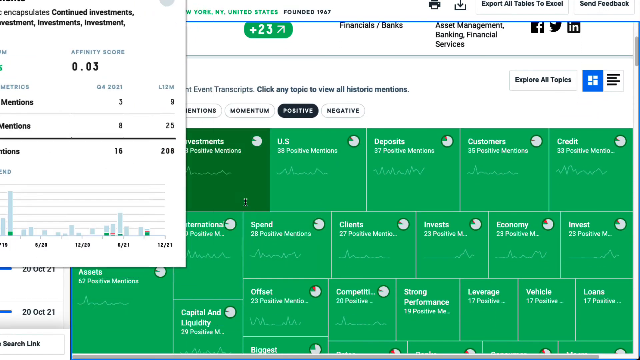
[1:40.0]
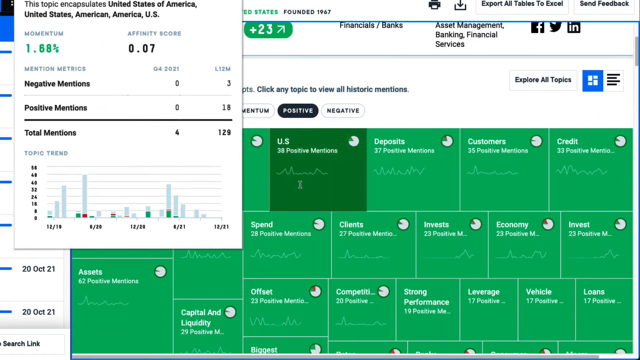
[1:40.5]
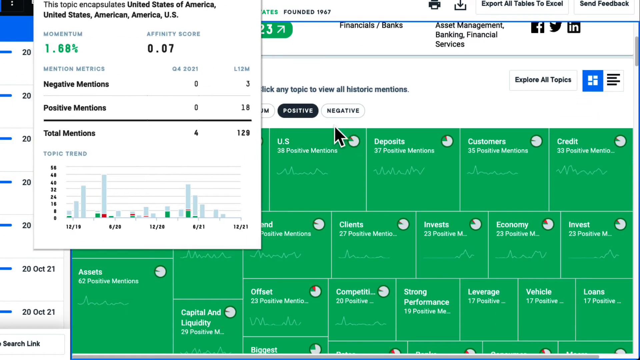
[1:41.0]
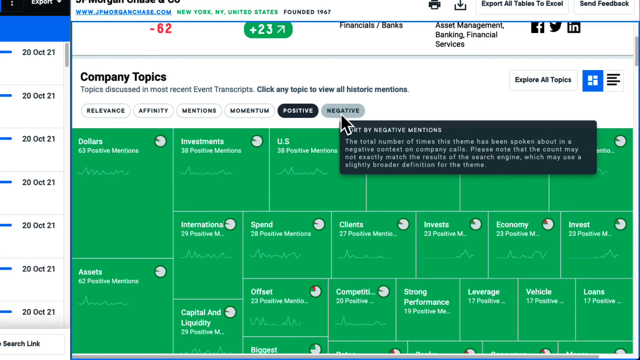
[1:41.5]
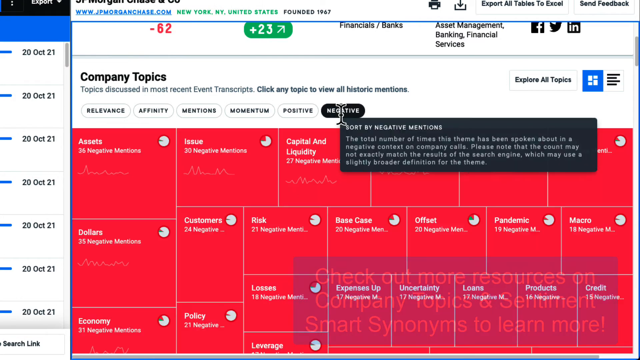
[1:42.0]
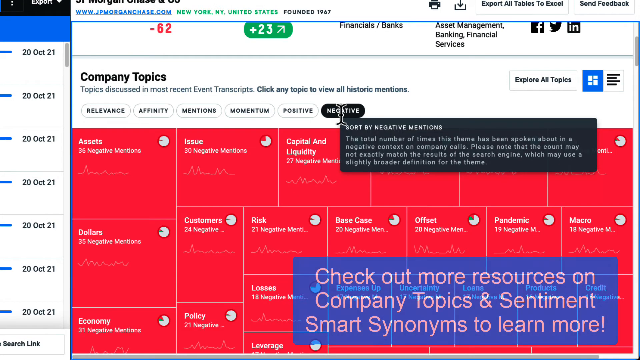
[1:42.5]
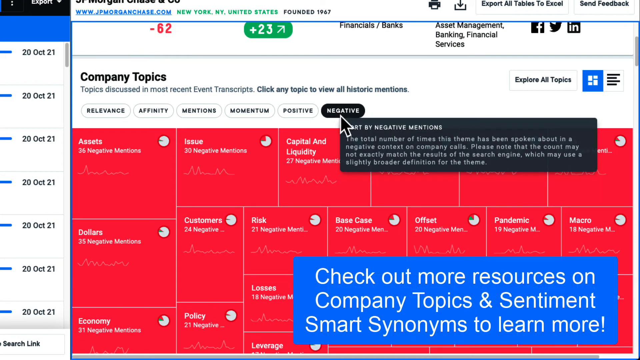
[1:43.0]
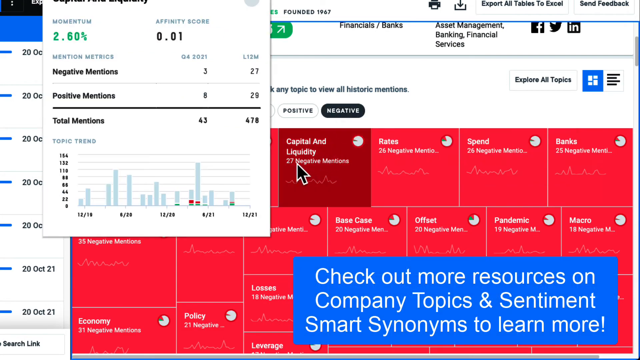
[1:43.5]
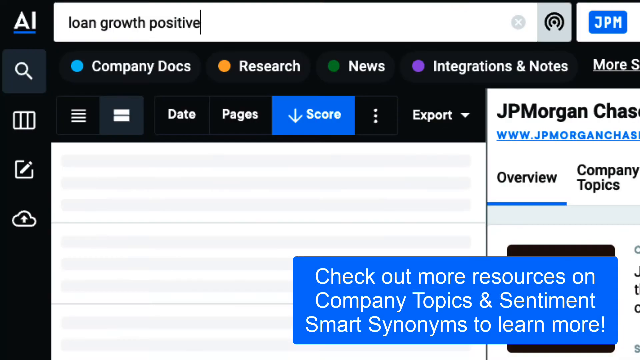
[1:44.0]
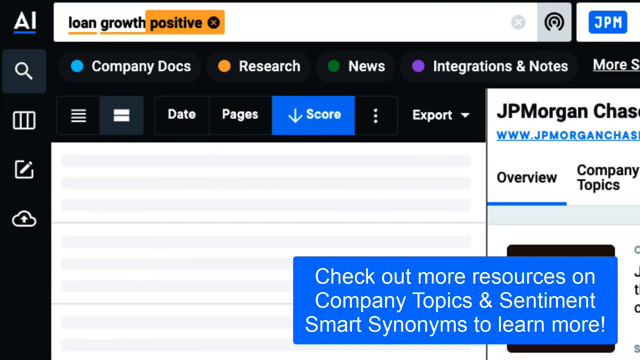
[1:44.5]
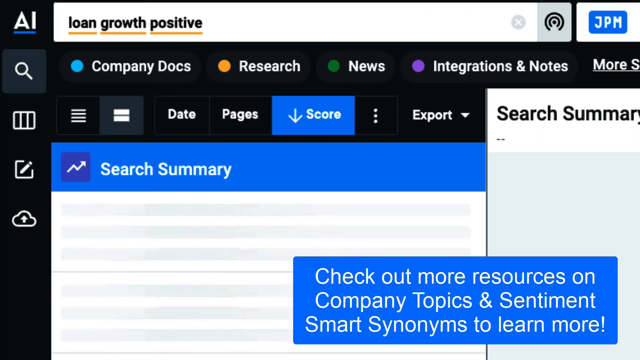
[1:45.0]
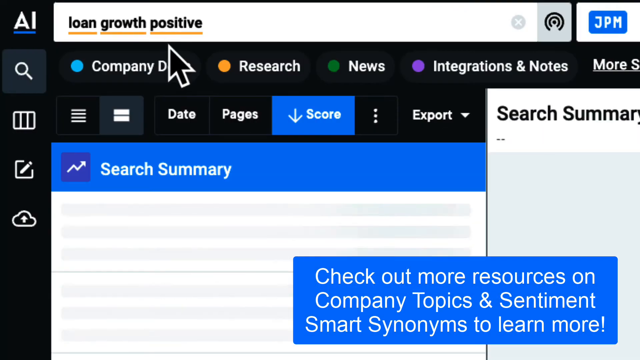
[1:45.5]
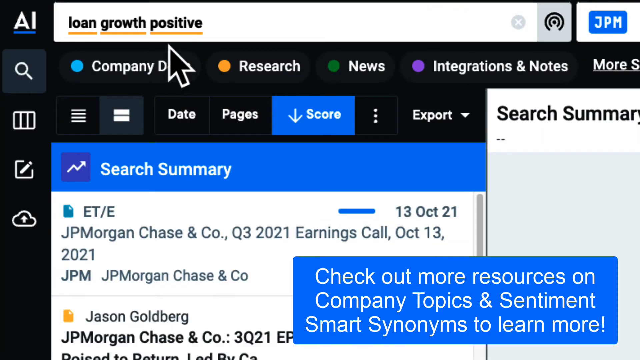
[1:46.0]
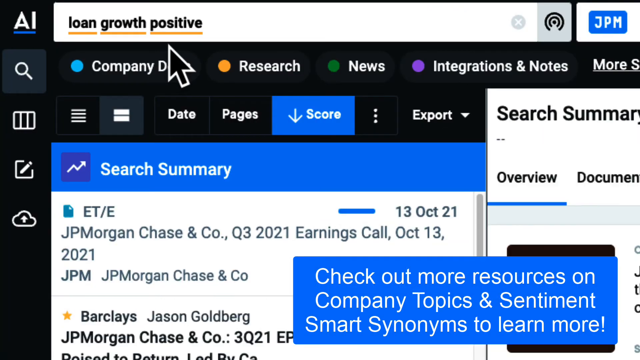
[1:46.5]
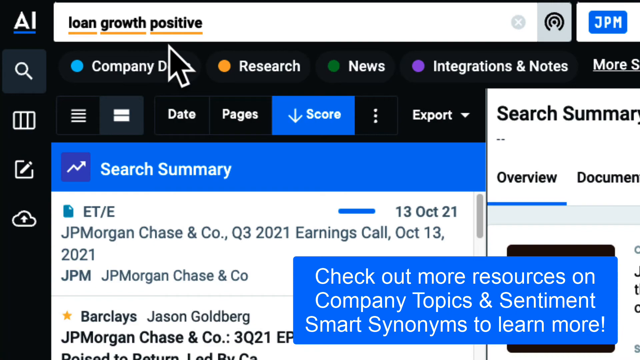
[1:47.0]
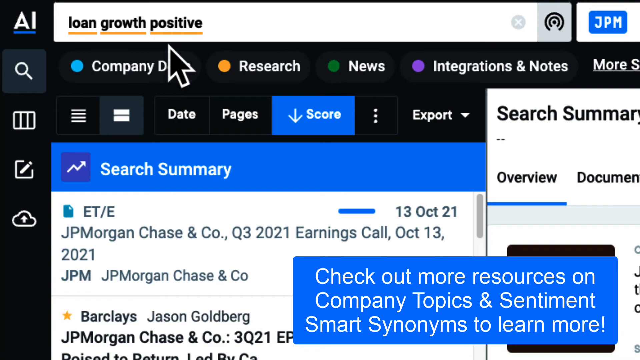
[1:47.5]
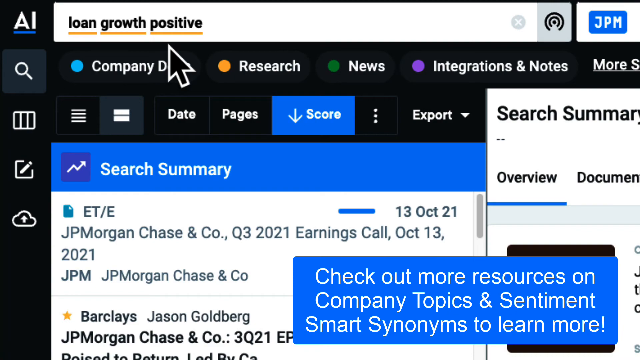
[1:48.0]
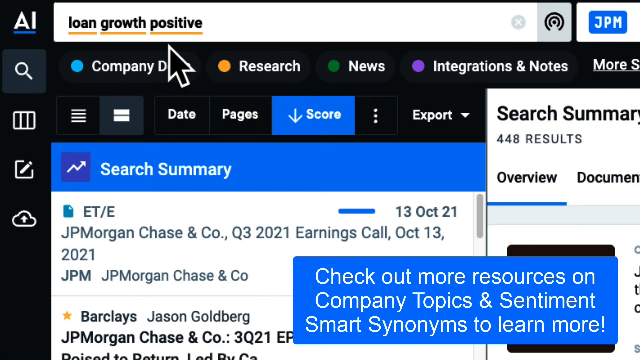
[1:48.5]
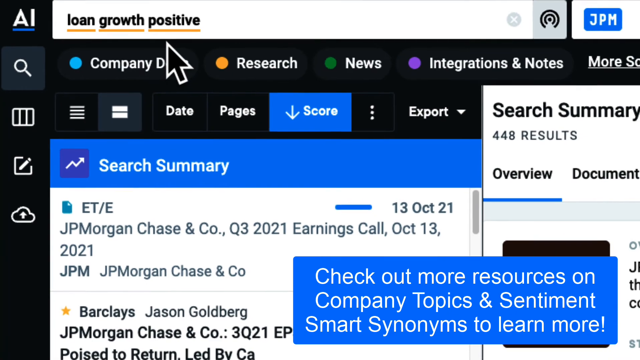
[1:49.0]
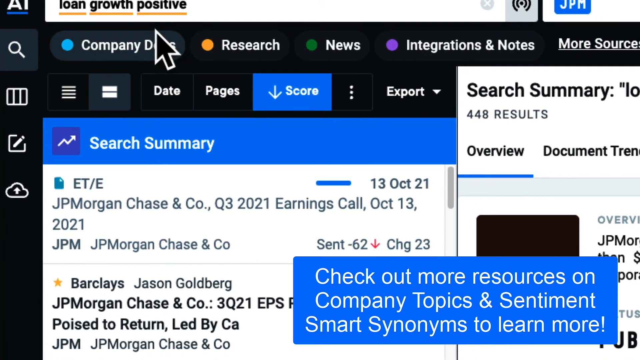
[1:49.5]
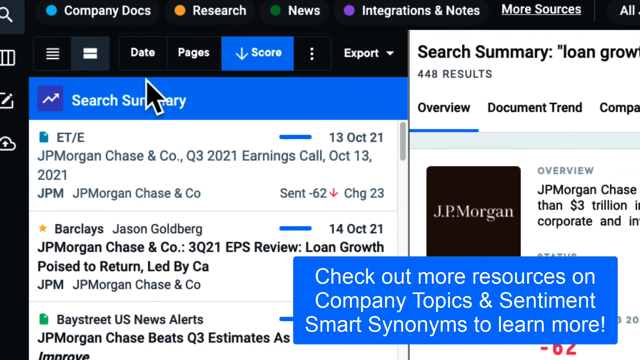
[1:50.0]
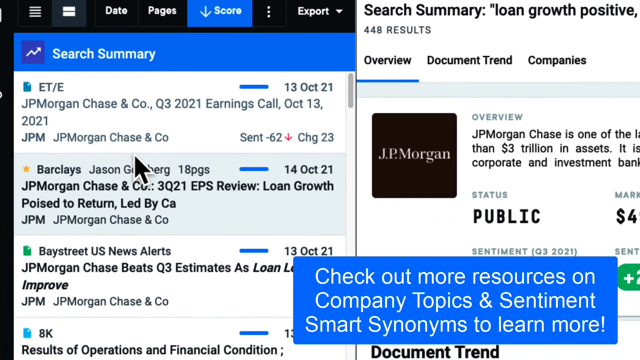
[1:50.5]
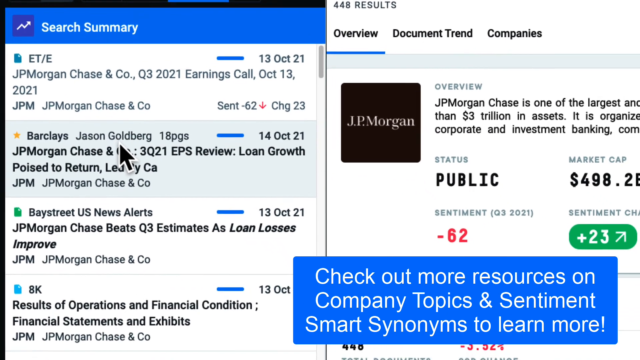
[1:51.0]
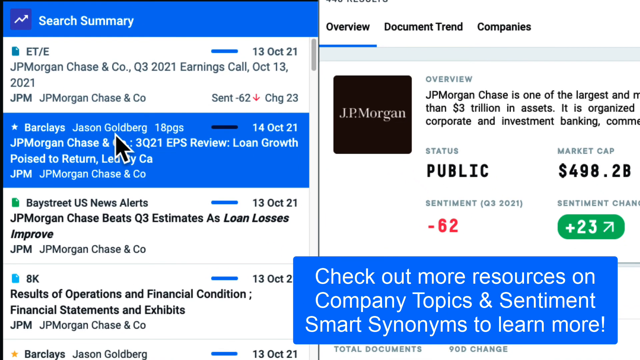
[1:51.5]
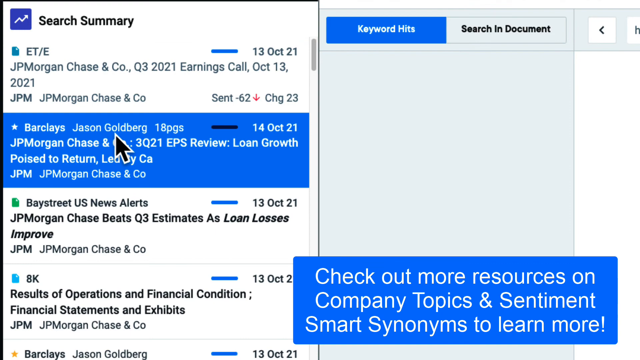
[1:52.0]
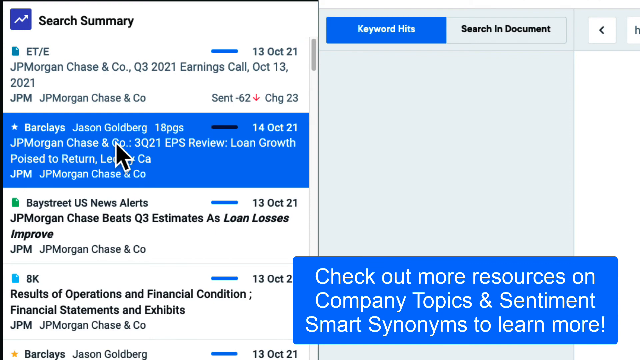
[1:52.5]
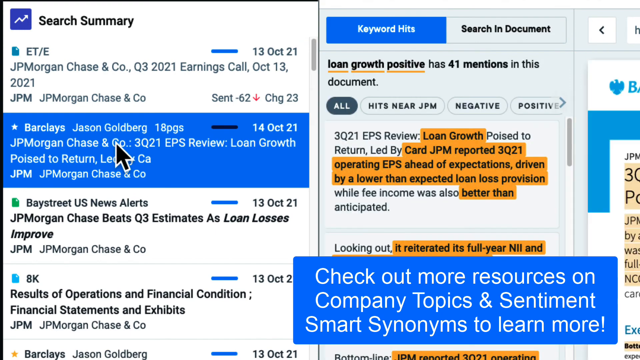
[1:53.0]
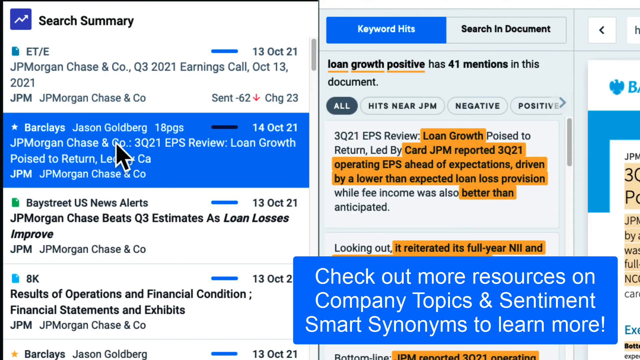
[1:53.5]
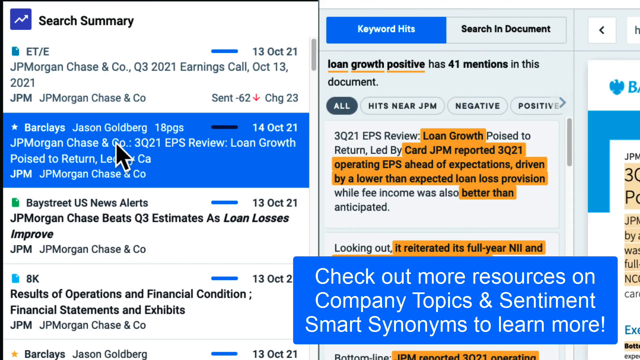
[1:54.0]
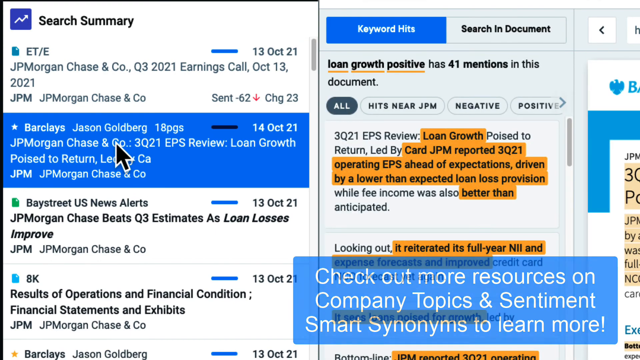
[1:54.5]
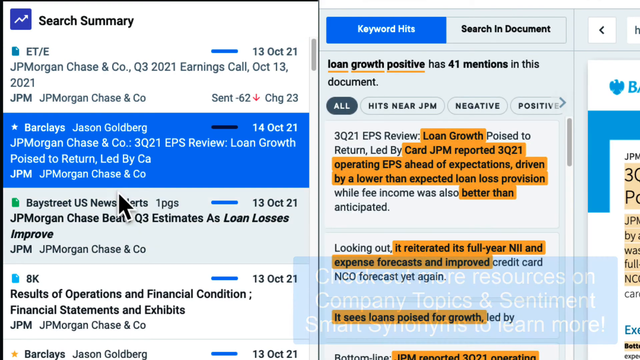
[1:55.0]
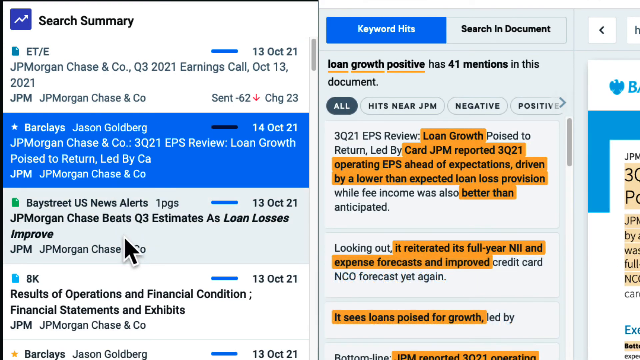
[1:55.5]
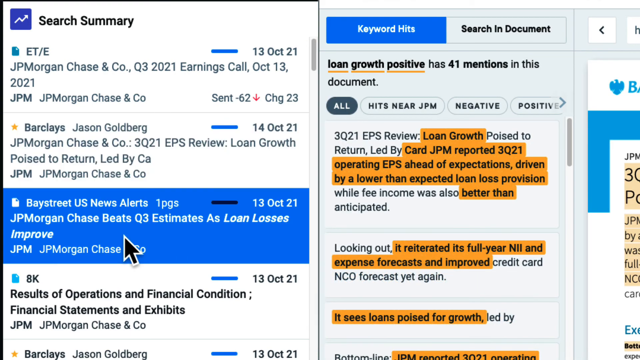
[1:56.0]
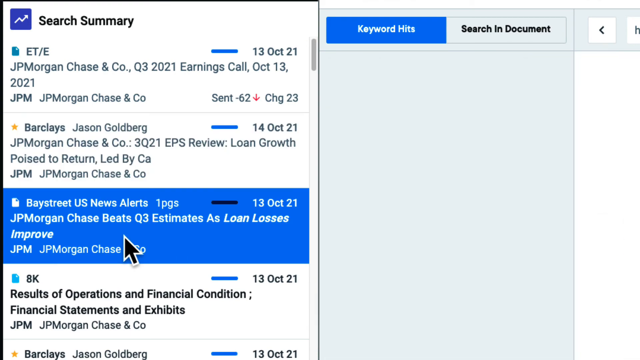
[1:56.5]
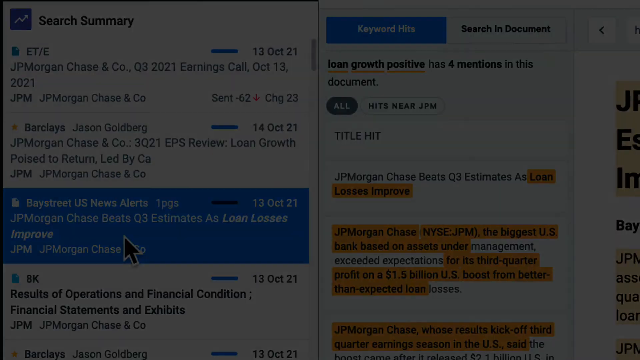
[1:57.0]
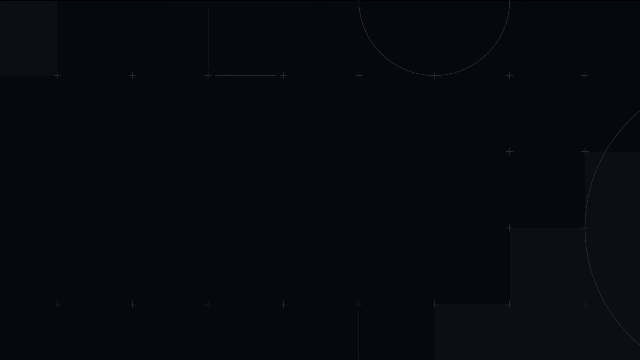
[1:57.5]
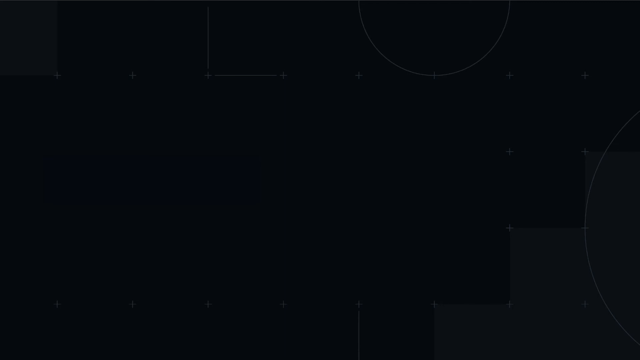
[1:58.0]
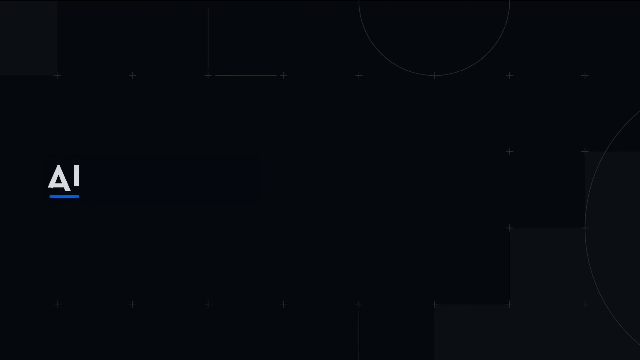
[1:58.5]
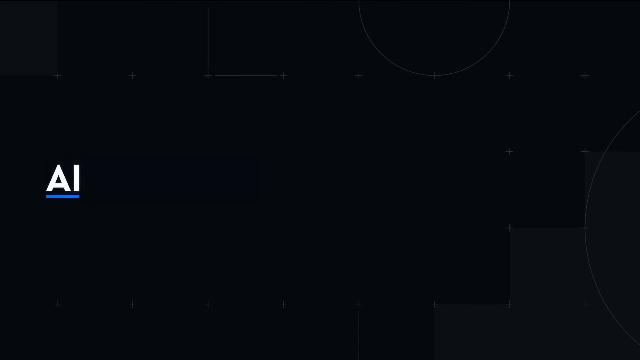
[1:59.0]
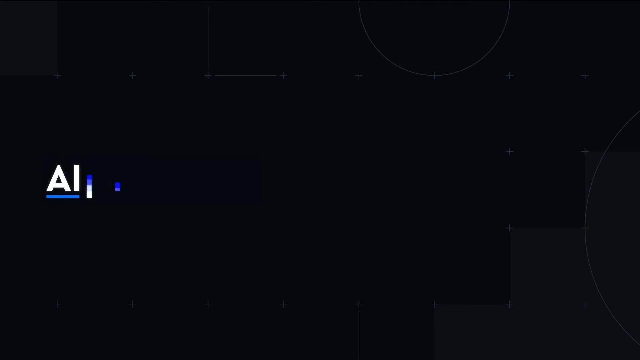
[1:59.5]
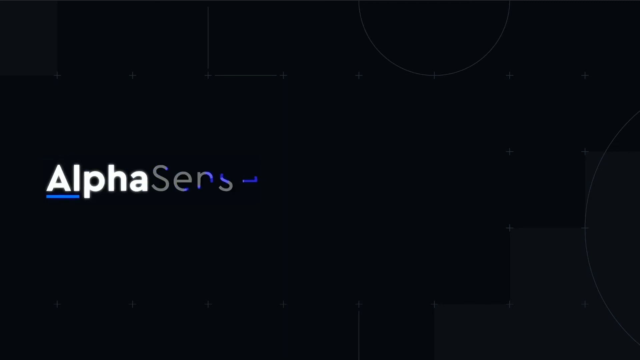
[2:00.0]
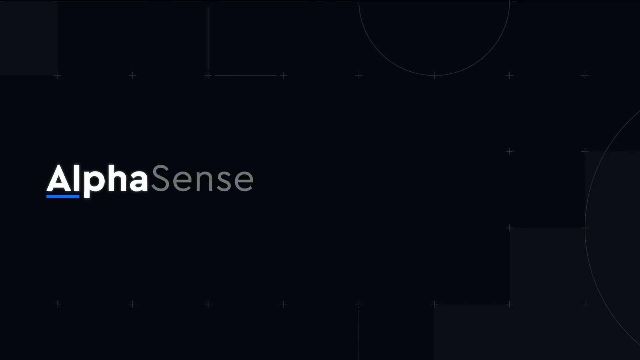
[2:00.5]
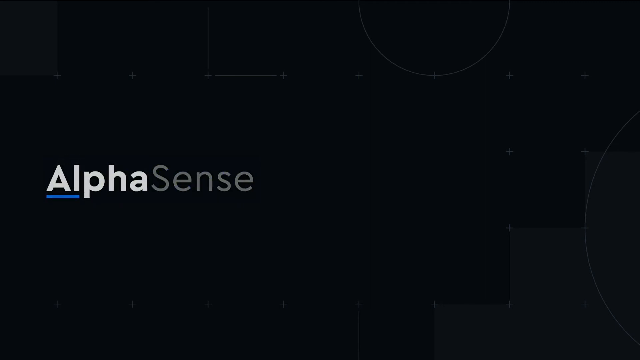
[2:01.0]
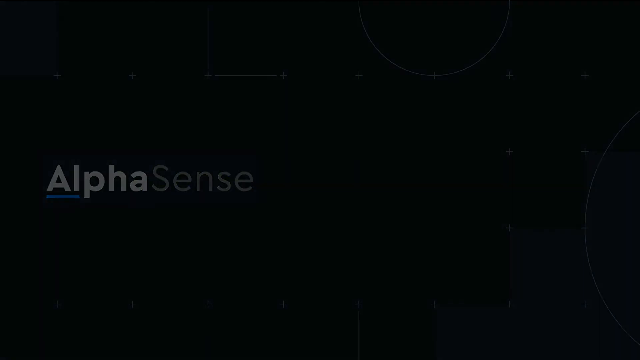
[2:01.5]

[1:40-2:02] Under company topics, with positive selected, green blocks show 63 positive mentions. While the green section is showing, the cursor is held over the negative block, and text appears: "sort by negative mentions. The total number of times the theme has been spoken about in a negative context on company calls. Please note that this count may not exactly match the results of the search engine, which may have a slightly broader definition for the theme." The view then reverts to the previous page, and a blue rectangle pops up saying "check out more resources on company topics and smart synonyms to learn more." When "Barclays Jason Goldberg, 18 pages, 14 October 21" is clicked, an orange-highlighted "loan growth" and "loan growth positive" with 41 mentions pops up.